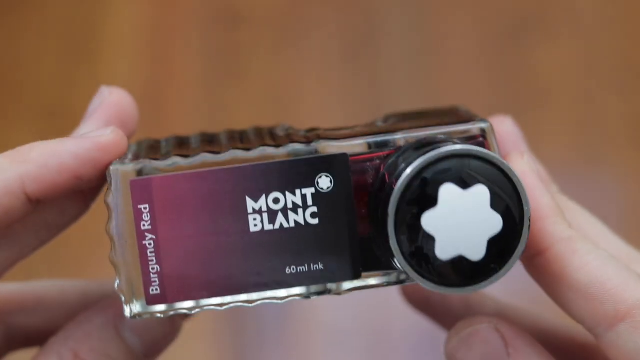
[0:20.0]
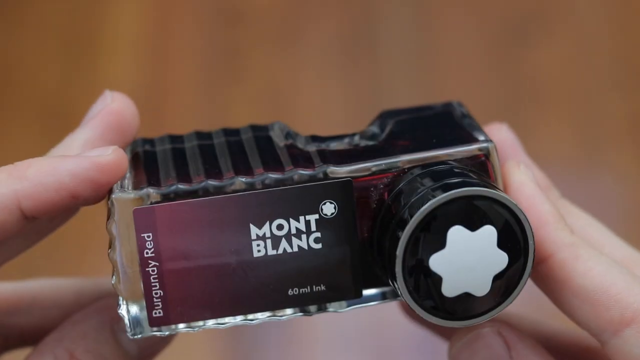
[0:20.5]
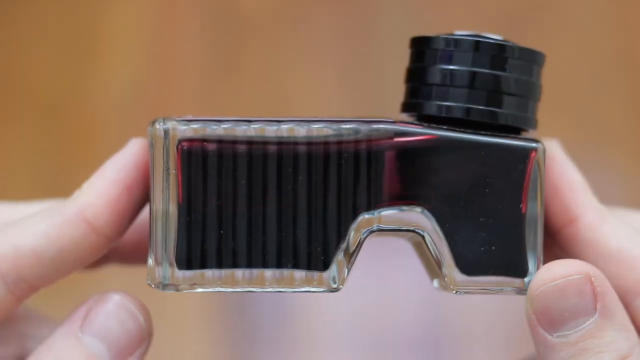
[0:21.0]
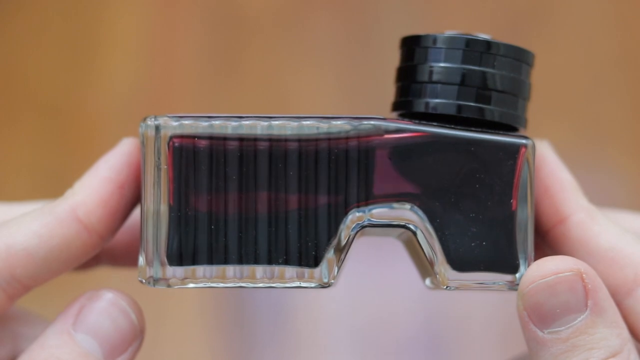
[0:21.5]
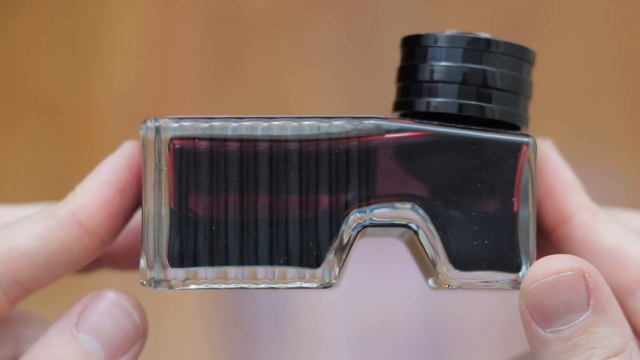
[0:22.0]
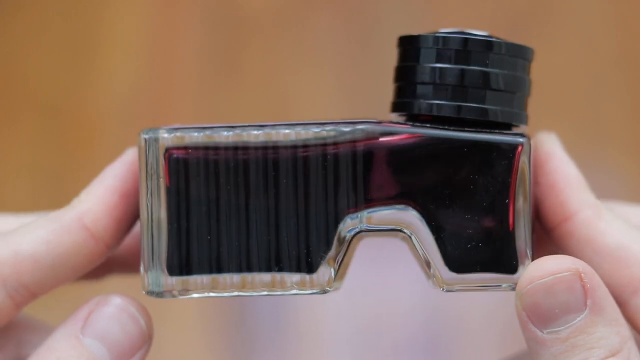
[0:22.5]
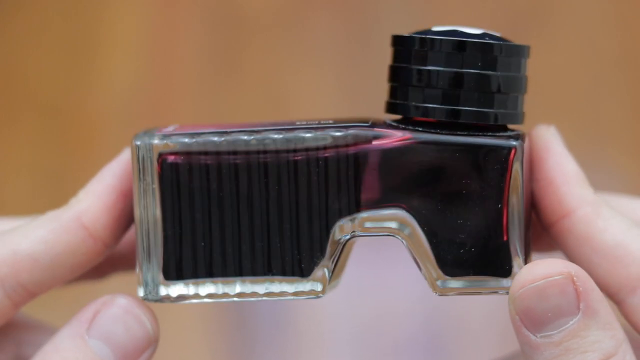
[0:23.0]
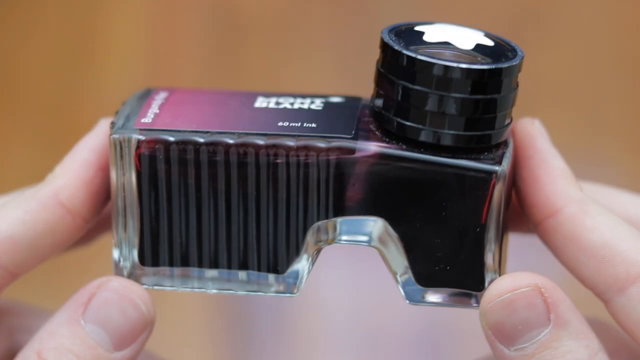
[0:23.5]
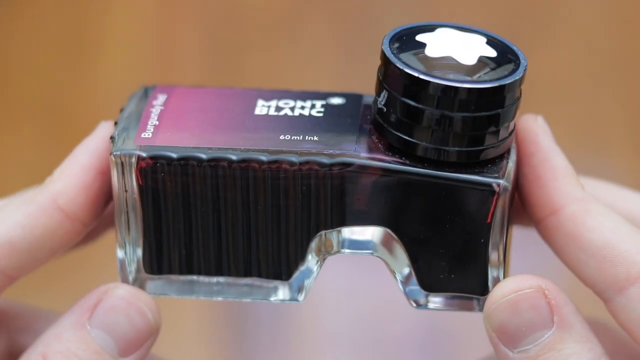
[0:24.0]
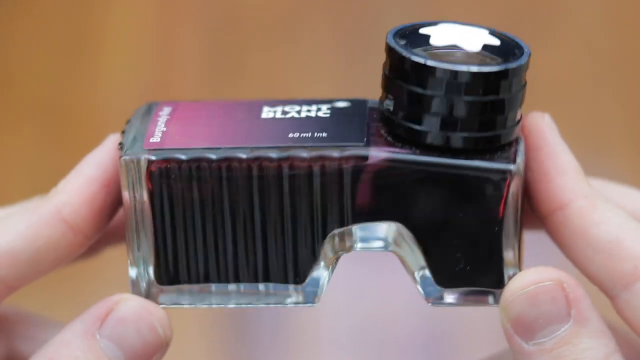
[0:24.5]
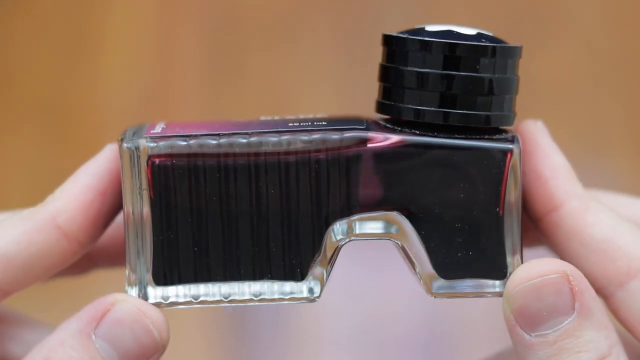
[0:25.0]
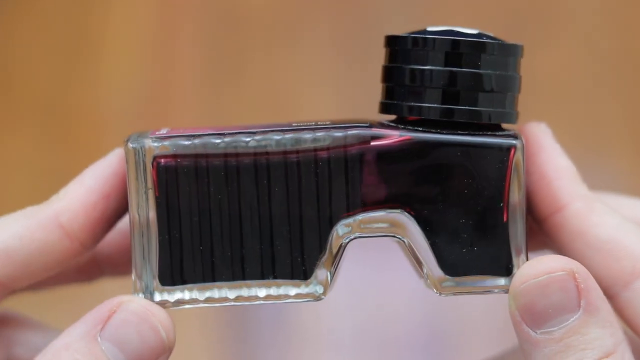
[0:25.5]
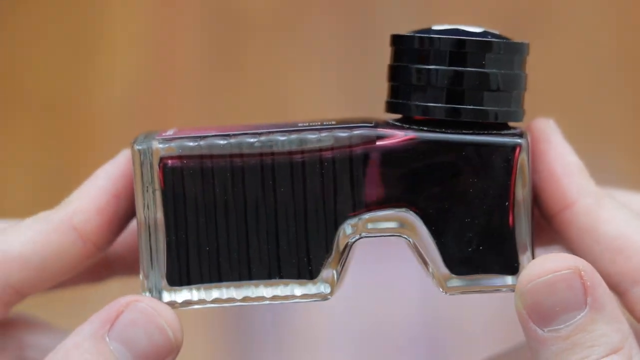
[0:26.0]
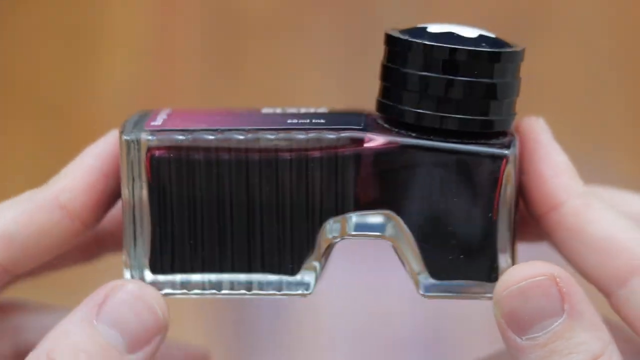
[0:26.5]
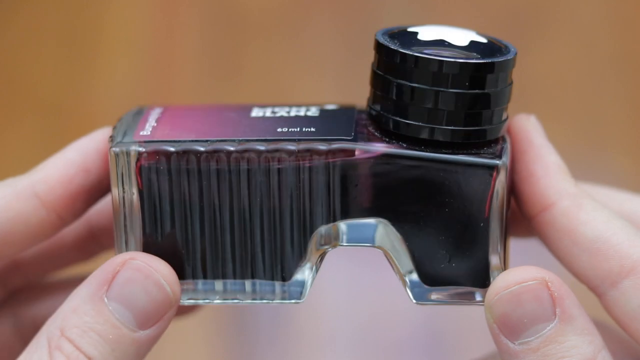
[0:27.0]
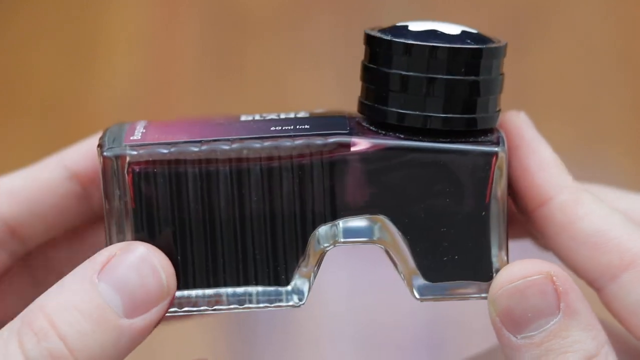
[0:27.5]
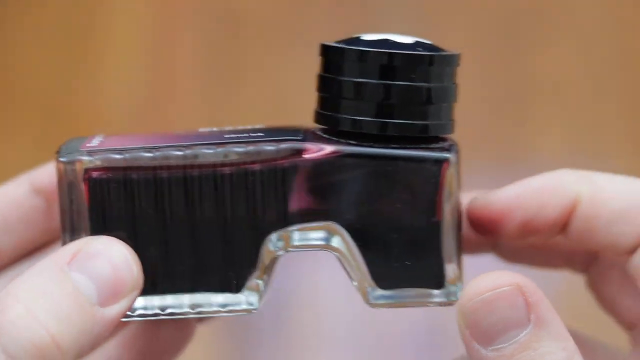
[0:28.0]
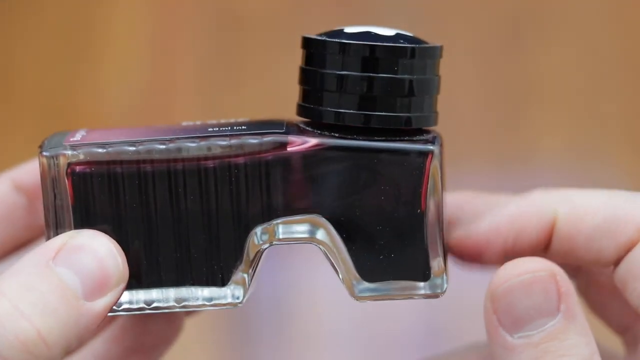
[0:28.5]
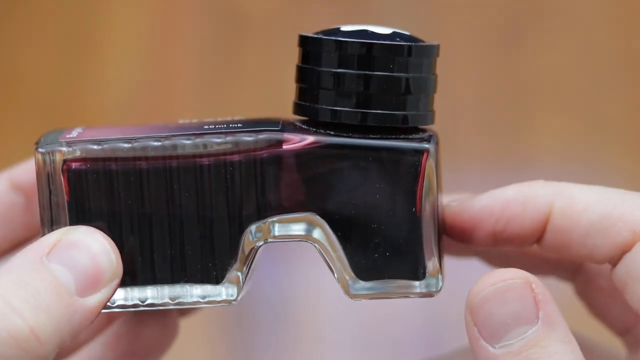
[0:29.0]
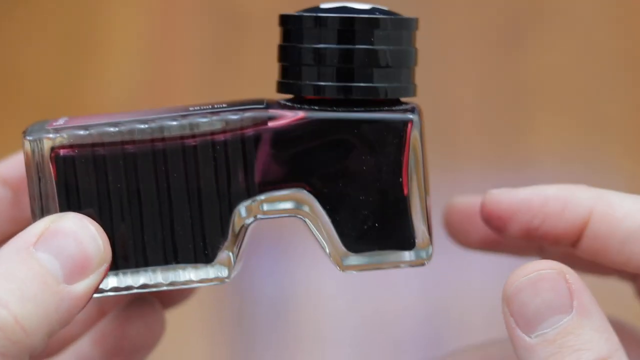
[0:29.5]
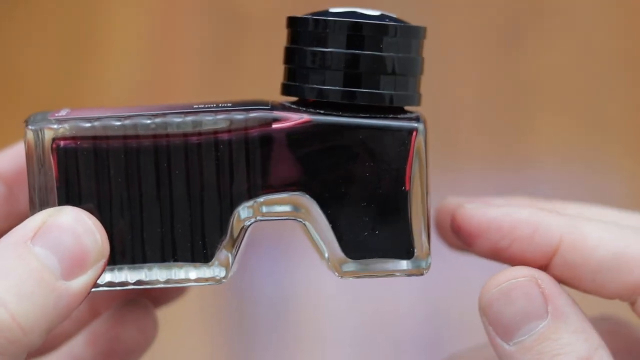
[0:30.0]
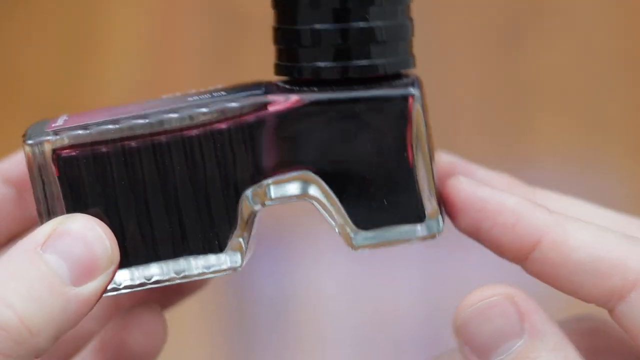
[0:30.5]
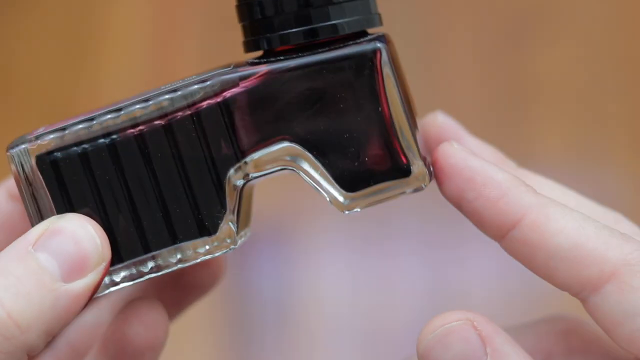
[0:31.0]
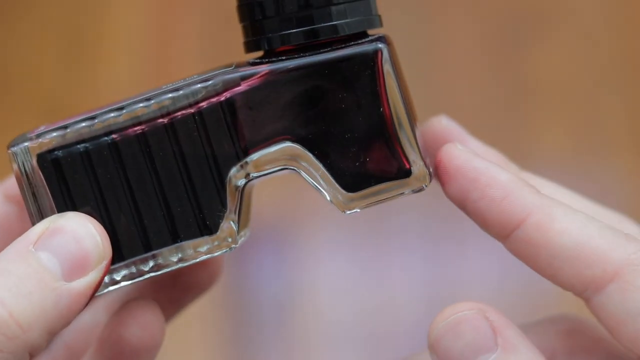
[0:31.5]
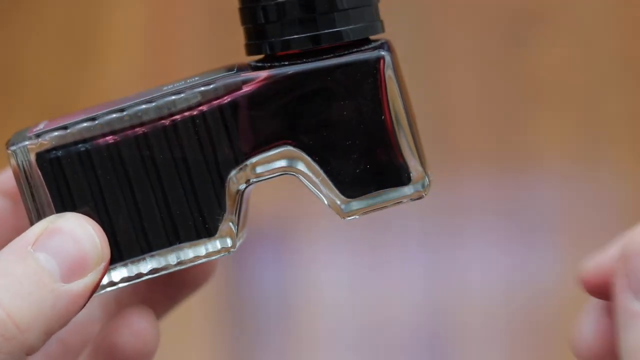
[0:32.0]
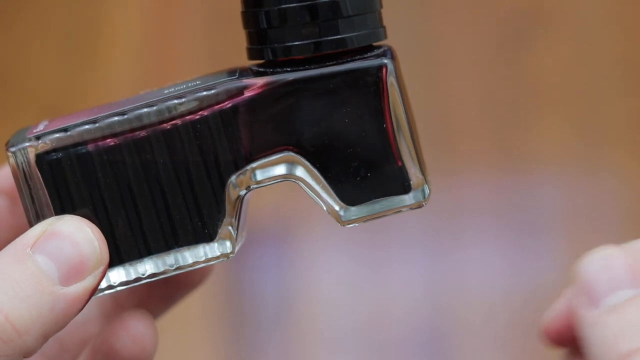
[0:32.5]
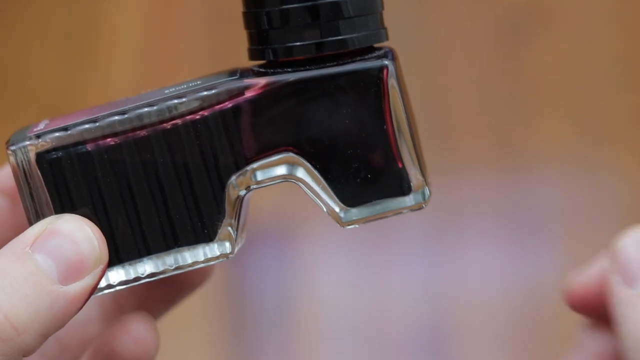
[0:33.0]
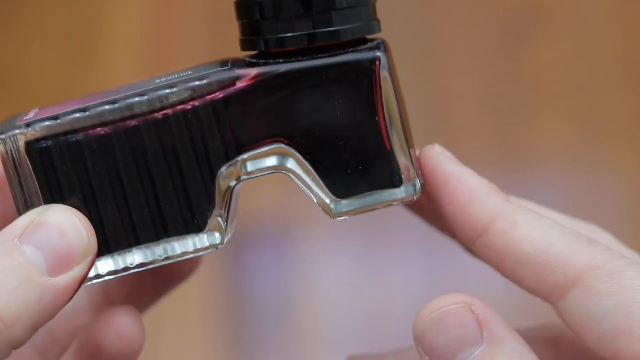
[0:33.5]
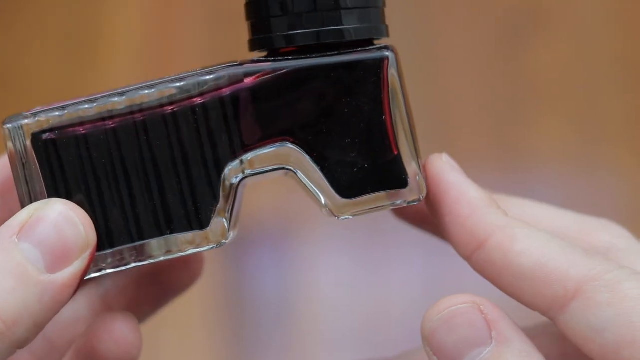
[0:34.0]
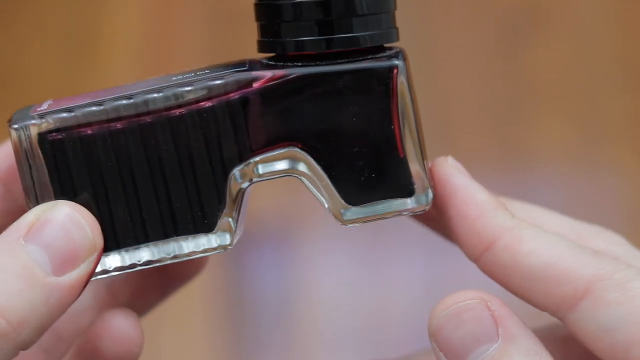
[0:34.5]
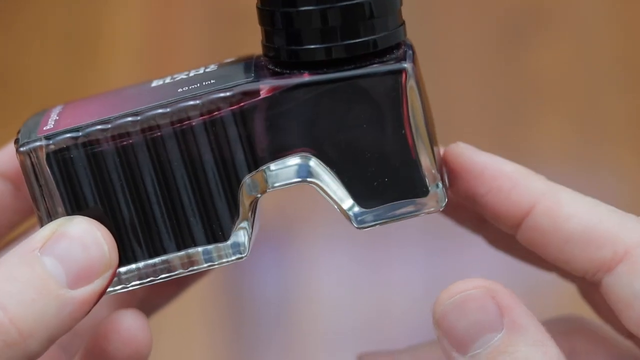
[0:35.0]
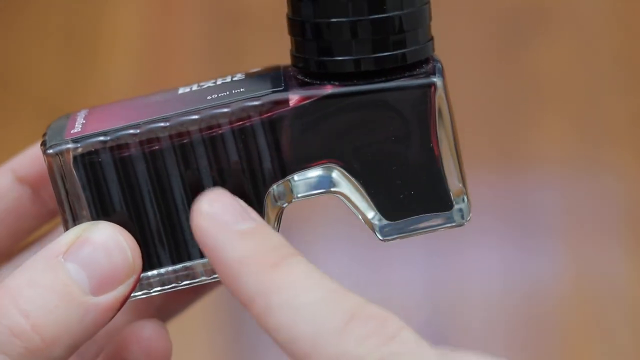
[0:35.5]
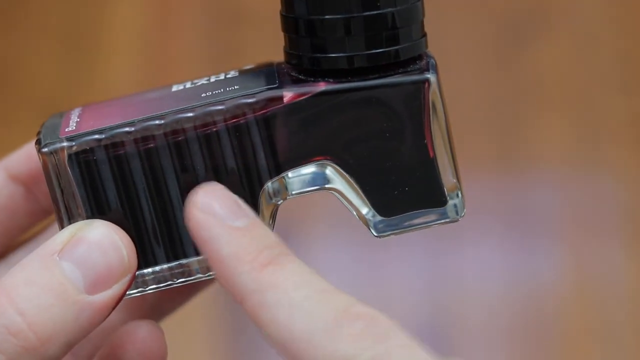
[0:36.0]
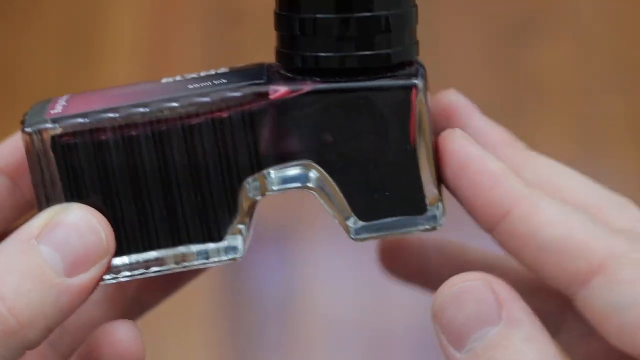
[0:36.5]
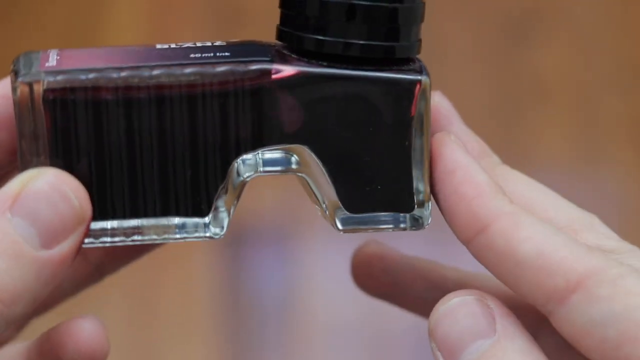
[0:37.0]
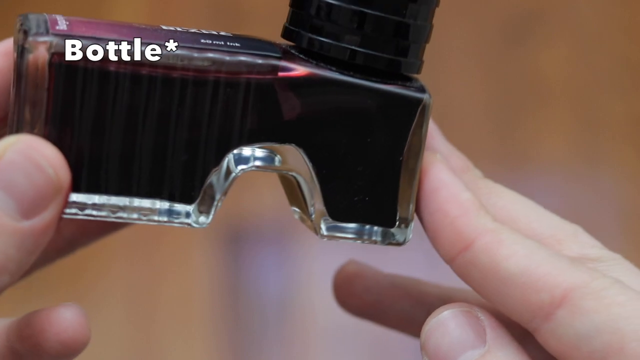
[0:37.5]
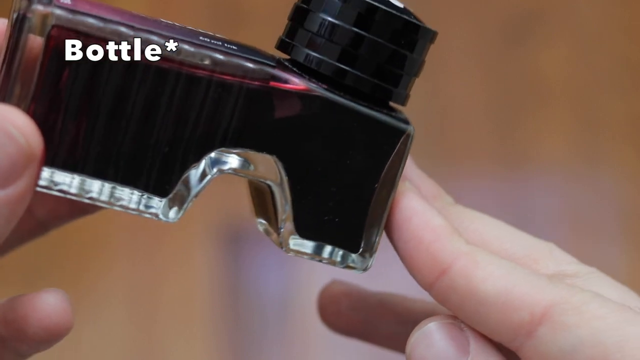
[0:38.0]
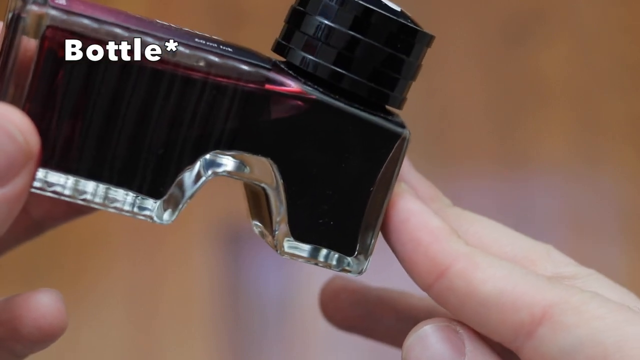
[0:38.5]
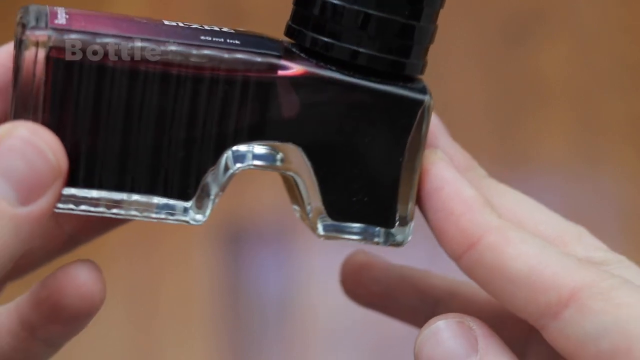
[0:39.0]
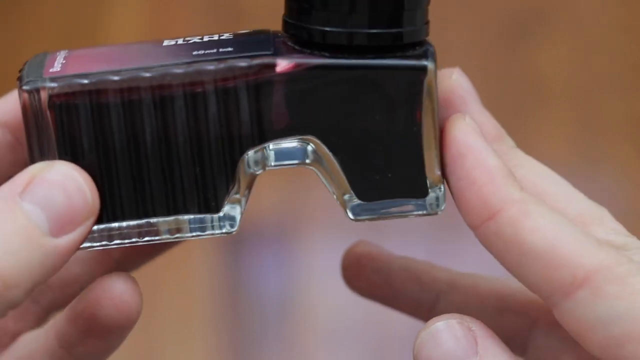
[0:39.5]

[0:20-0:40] The side of the ink bottle is shown. Three fingers hold the bottle for the camera on the left side and three on the right side; the thumbs are at the bottom base, while the index and middle fingers are at the top of the bottle, securing it. The presenter tilts it up to be viewed by the camera and puts it back to the side. The presenter re-grips the left side of the bottle and rubs the index finger along the right side. The bottle is then tilted up at a 90-degree angle with the left hand. After holding fingers down on the right side, the presenter uses the index finger to point to one of the ridges on the side of the bottle. The presenter then turns the left side of the bottle up at about a 90-degree angle and sets it level, and the liquid can be seen shifting inside.